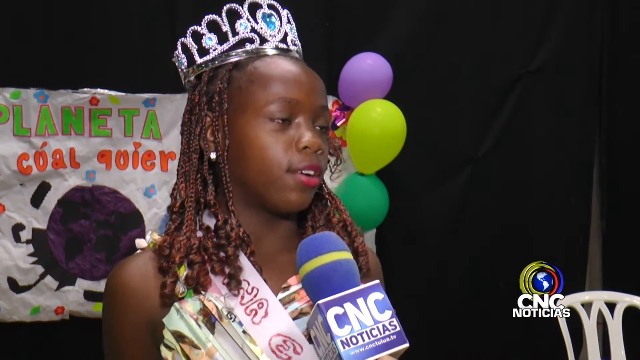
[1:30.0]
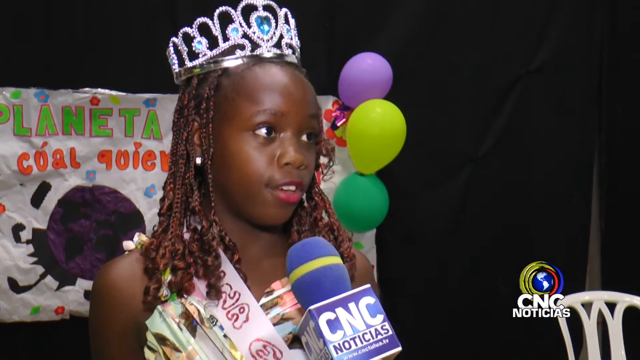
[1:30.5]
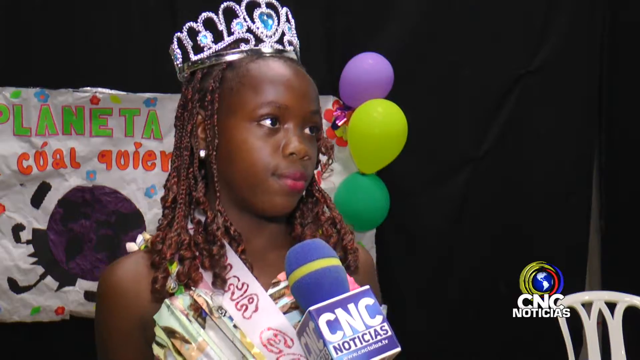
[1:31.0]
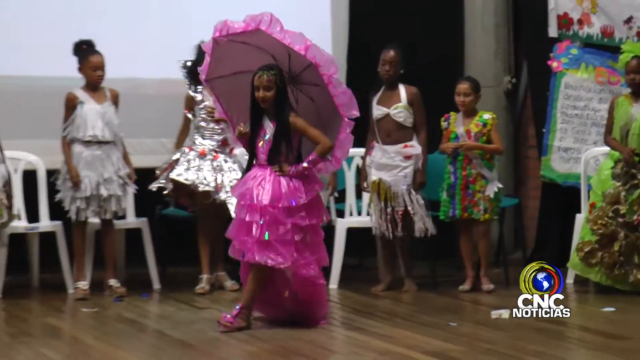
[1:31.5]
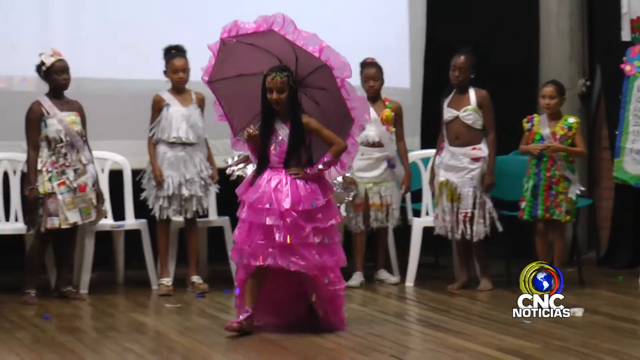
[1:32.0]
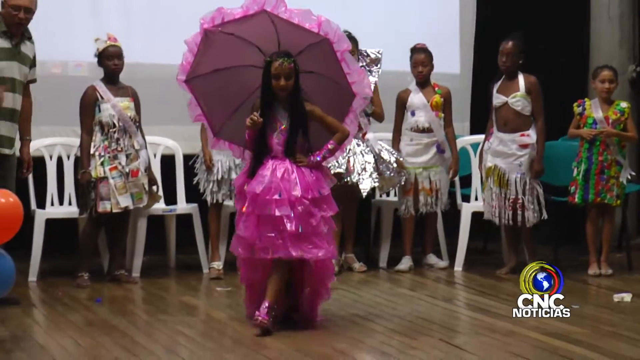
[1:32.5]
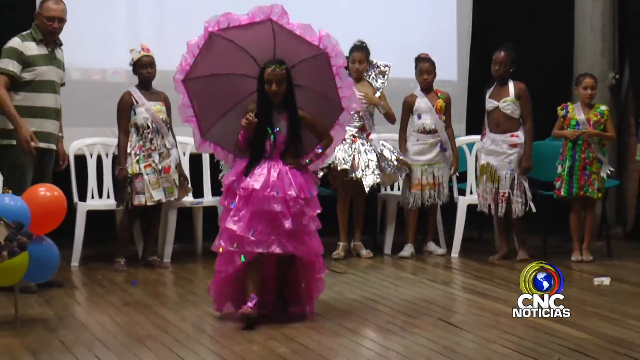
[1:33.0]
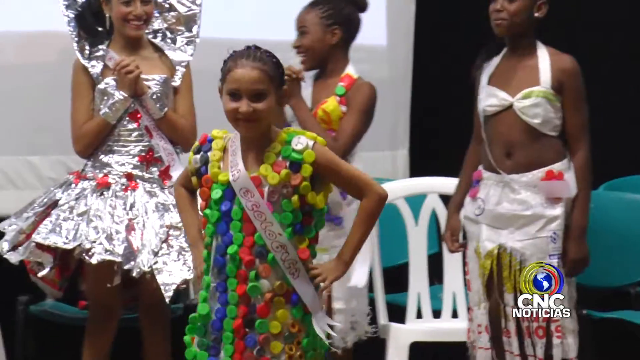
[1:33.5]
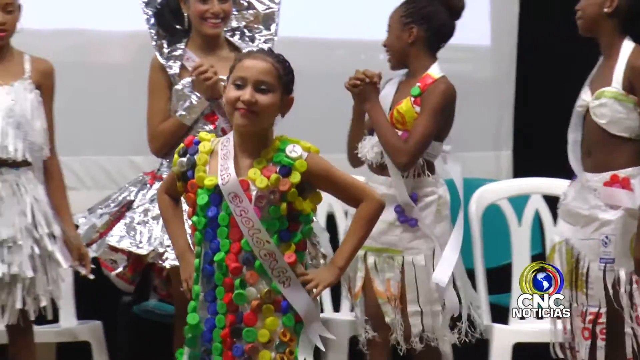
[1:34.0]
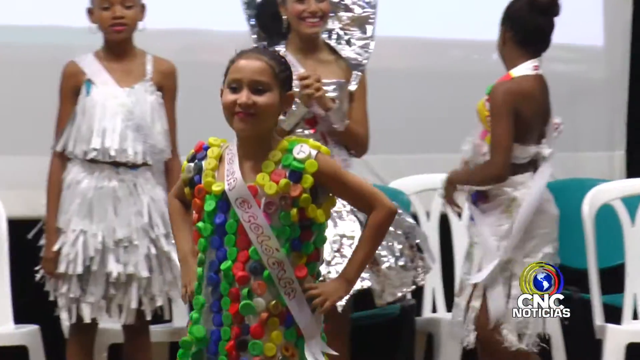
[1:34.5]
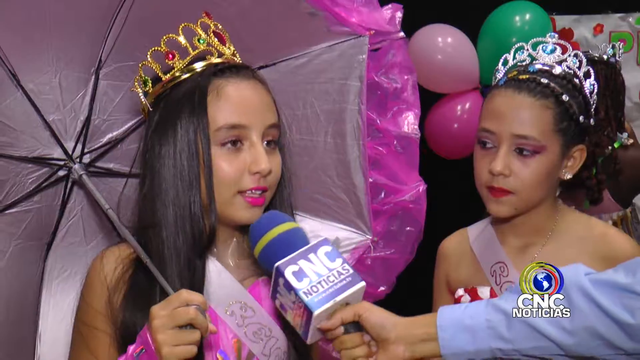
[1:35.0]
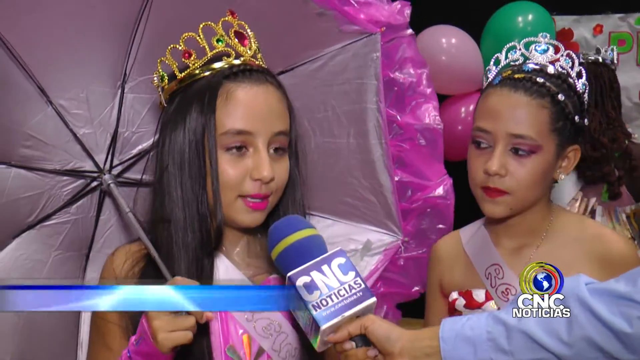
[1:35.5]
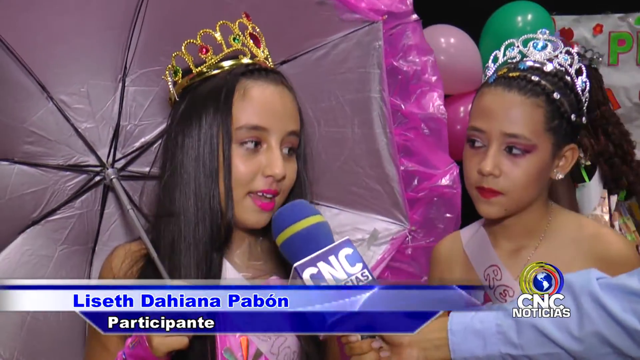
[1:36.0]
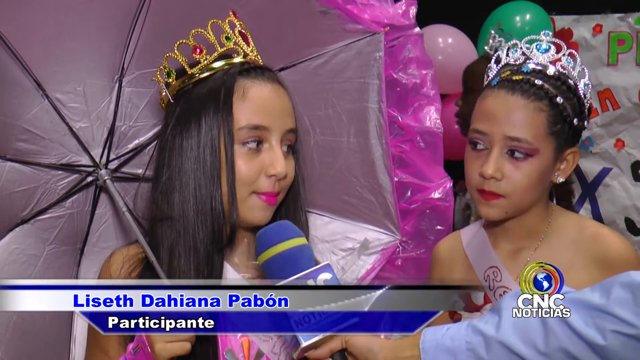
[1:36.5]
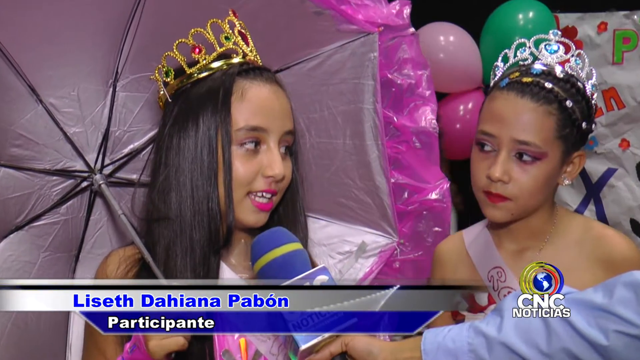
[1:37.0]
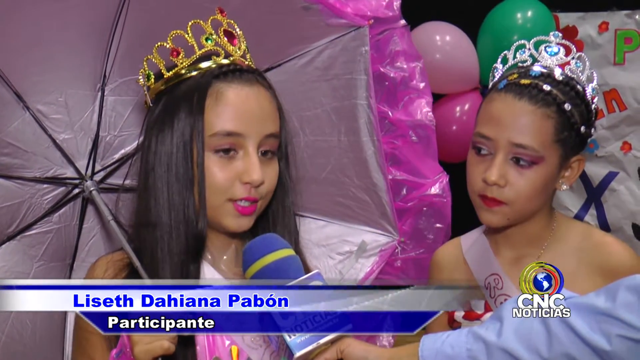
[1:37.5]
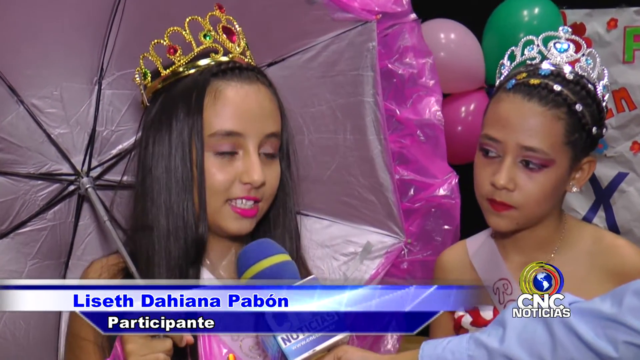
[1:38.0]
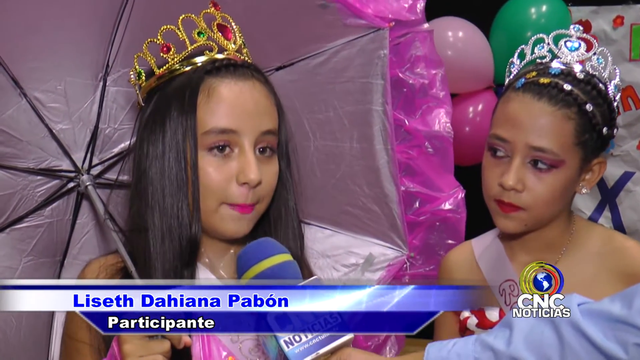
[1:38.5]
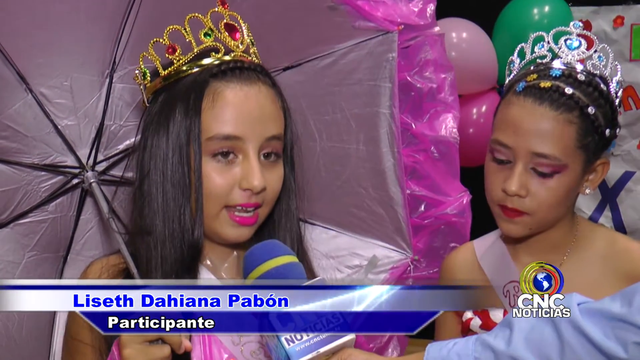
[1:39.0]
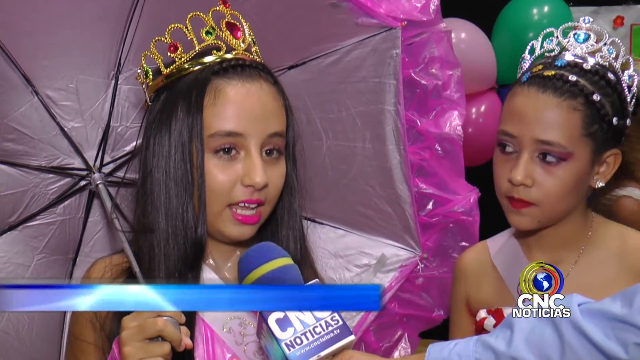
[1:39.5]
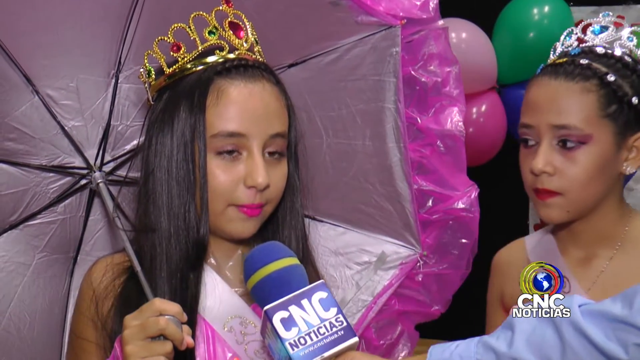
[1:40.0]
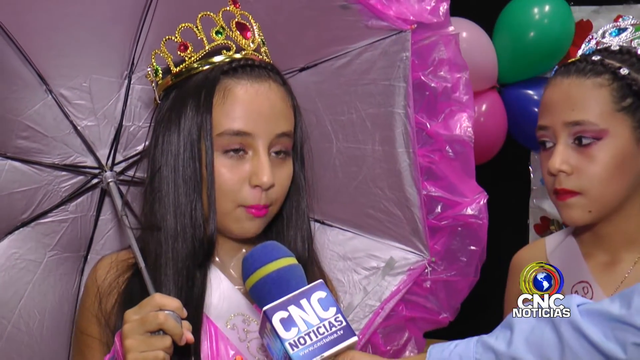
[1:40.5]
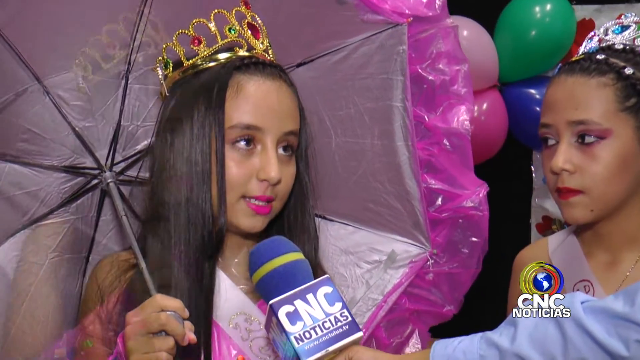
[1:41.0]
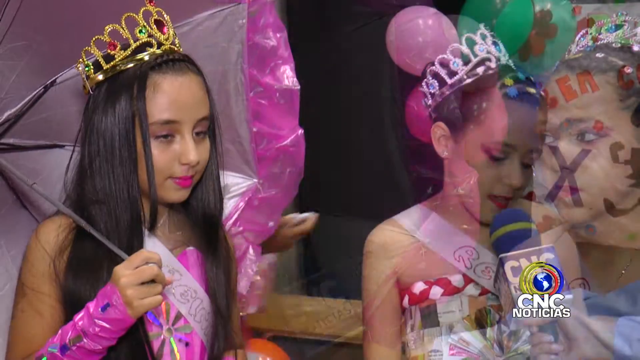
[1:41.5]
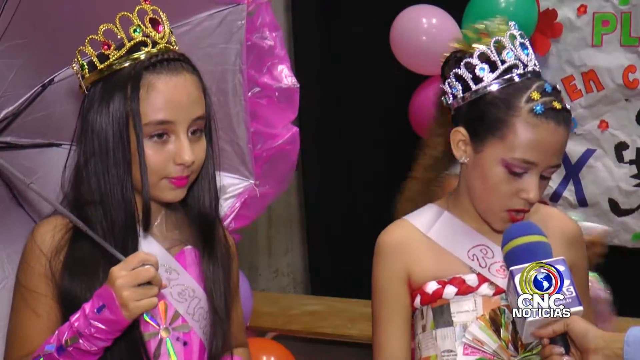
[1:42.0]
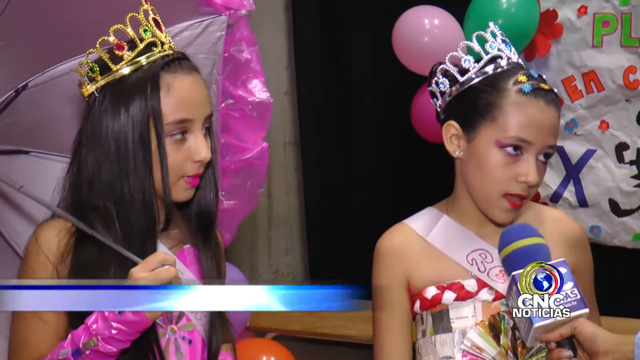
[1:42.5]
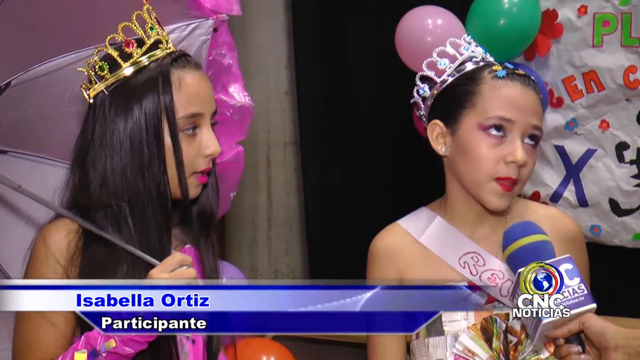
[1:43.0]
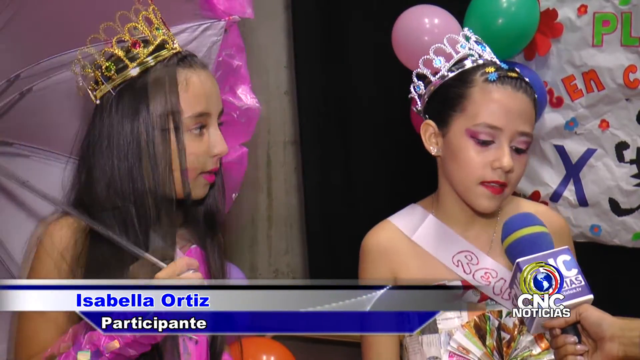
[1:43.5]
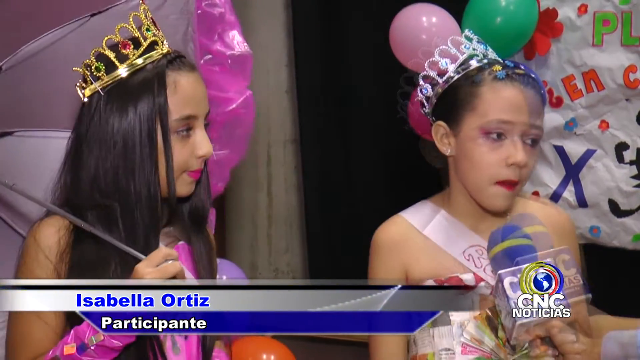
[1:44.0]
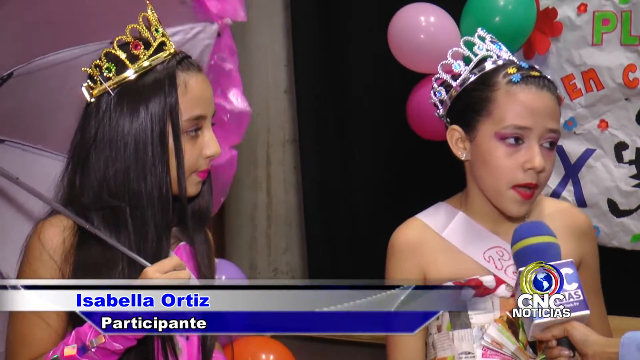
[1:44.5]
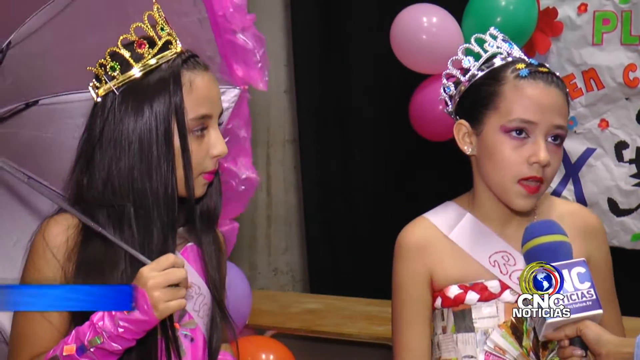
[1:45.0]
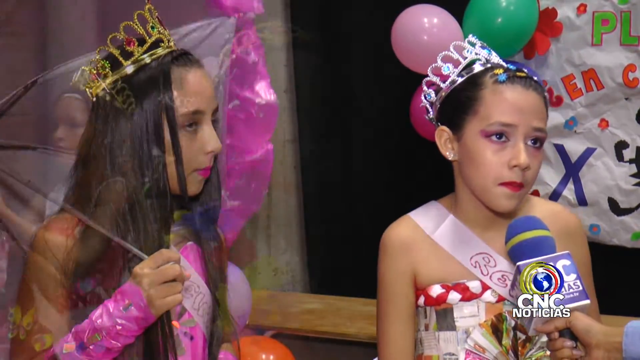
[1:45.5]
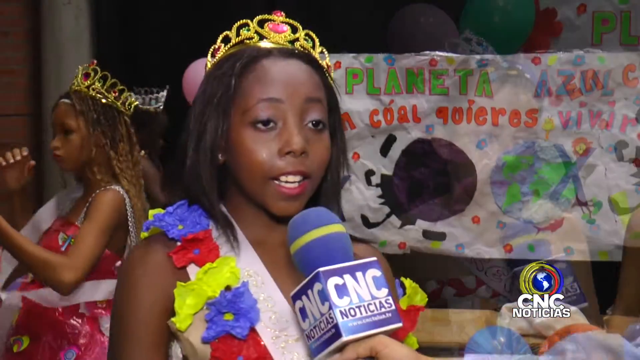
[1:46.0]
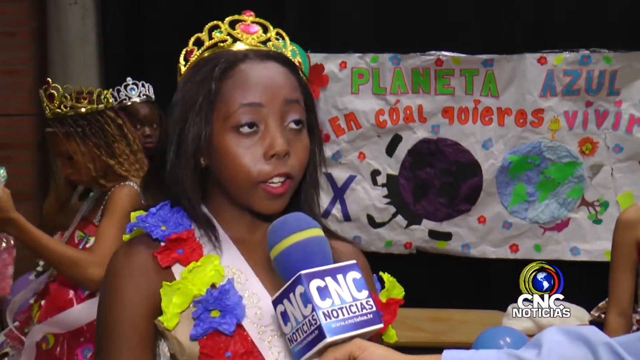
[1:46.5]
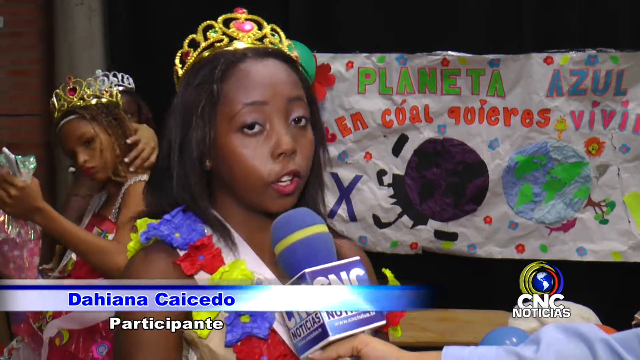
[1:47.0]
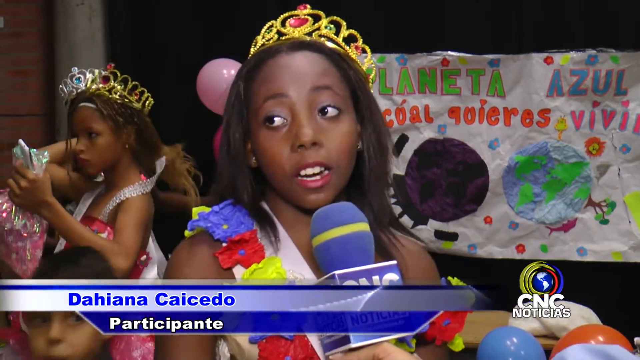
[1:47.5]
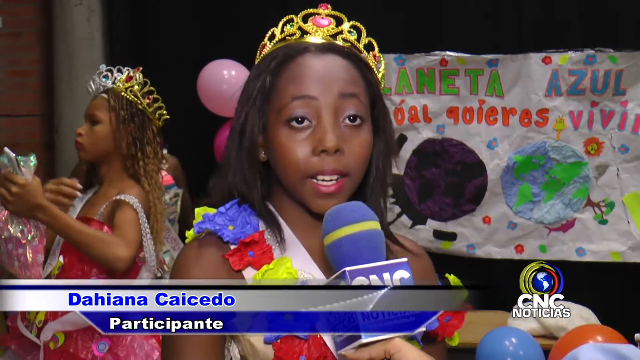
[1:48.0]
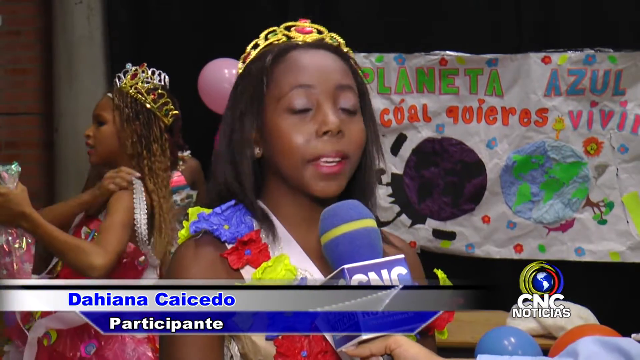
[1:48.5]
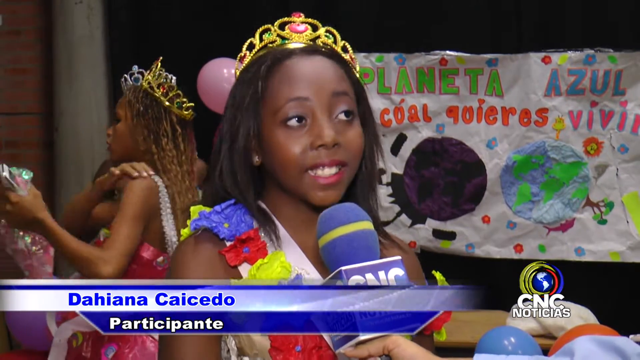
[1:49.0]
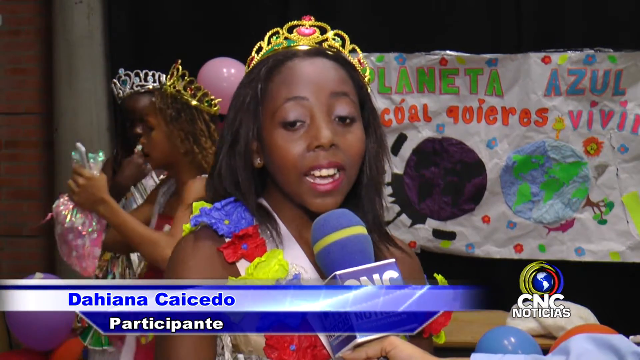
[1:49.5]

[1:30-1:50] Under the title "Las Noticias Que Usted Quiere Ver Lunes a Viernes", CNC Noticias continues interviewing participants, who are pretty much exclusively African American girls. Sarah Sinisterra, another participant, is interviewed. Next is Liseth Dahiana Pabon, a Hispanic girl dressed all in pink, holding a large pink umbrella. Another participant is interviewed without her name being shown. Then Dahiana Caicedo, an African American girl, is interviewed; her outfit has almost Hawaiian influences, with a blue or red flower and a yellow flower. Mostly African American girls take part in this Hispanic-influenced pageant, with Hispanic girls here and there.